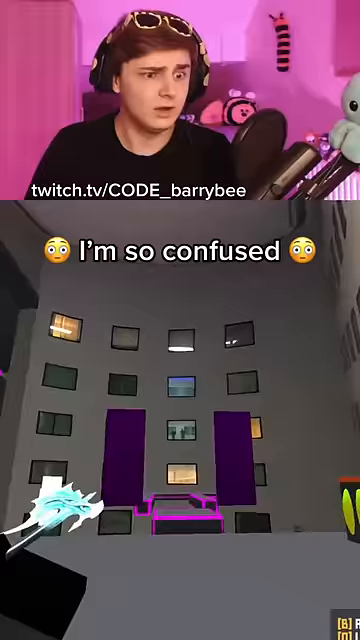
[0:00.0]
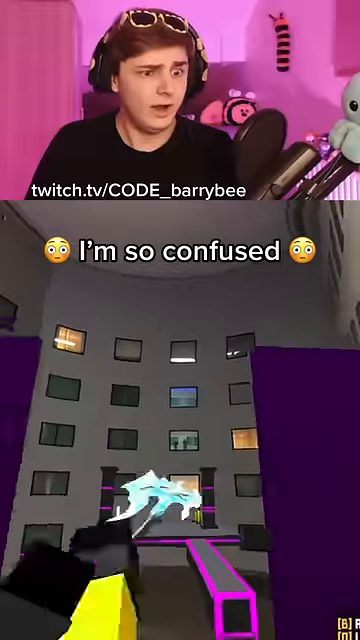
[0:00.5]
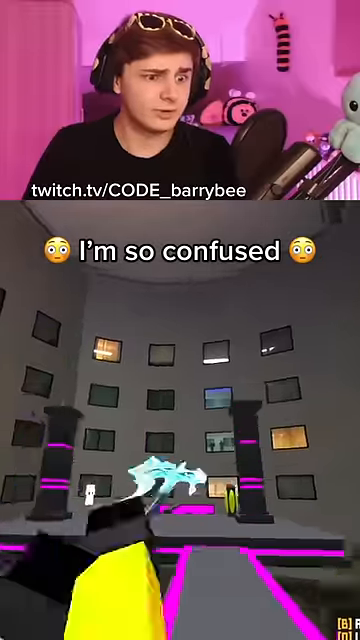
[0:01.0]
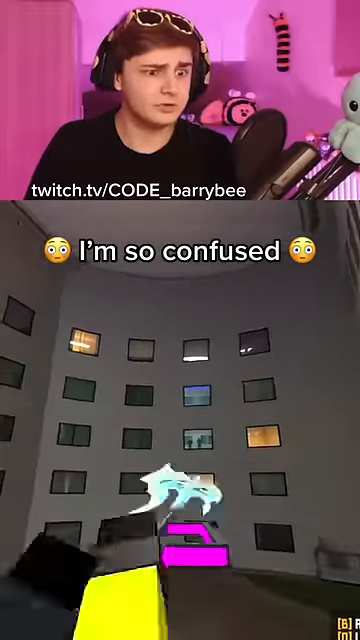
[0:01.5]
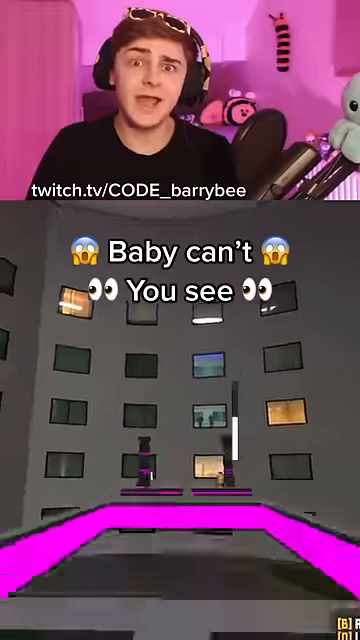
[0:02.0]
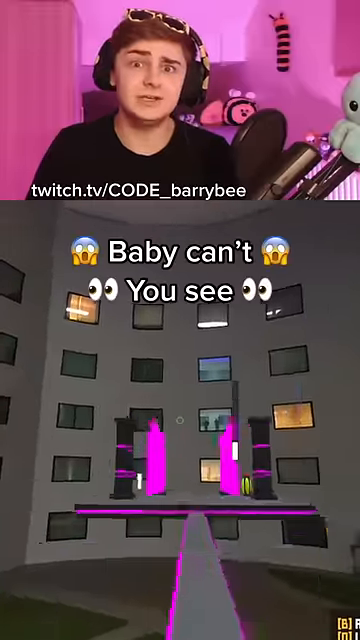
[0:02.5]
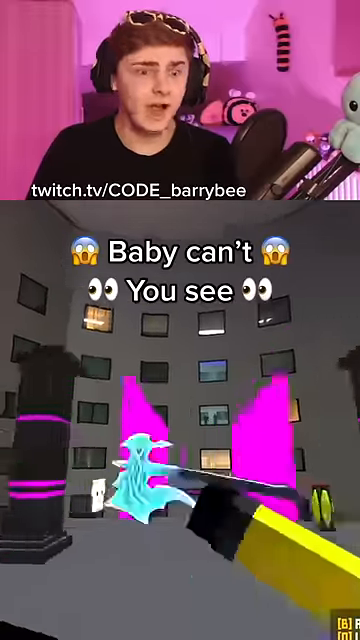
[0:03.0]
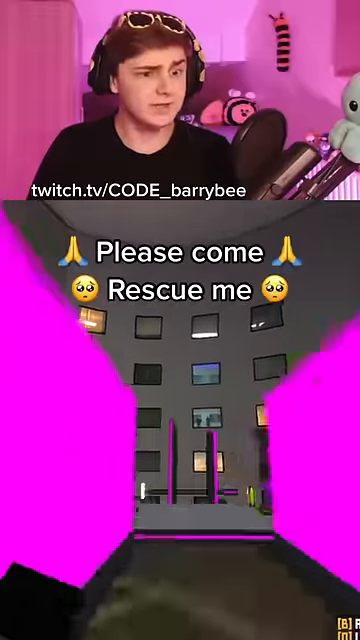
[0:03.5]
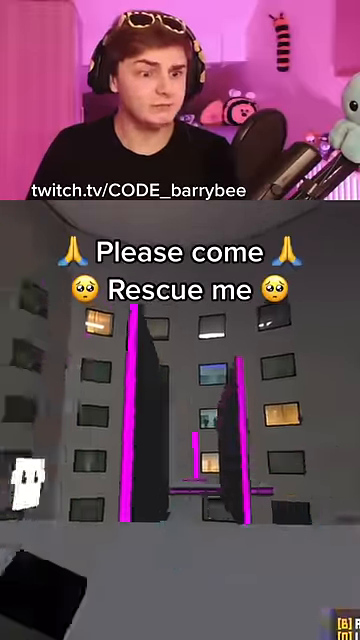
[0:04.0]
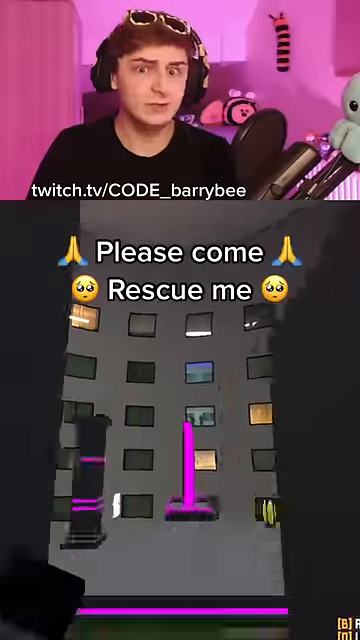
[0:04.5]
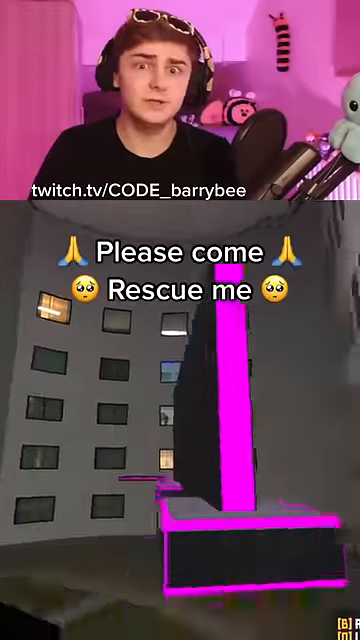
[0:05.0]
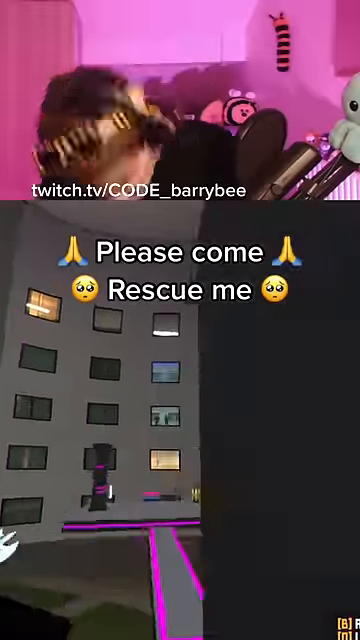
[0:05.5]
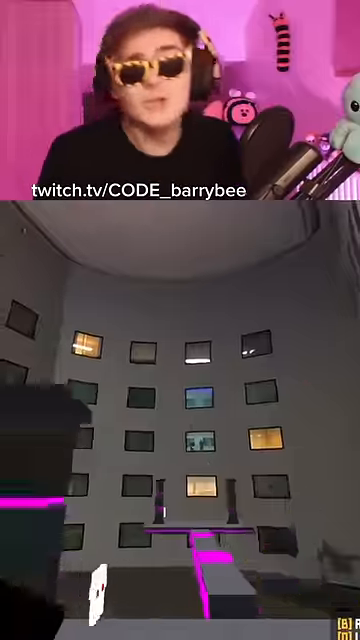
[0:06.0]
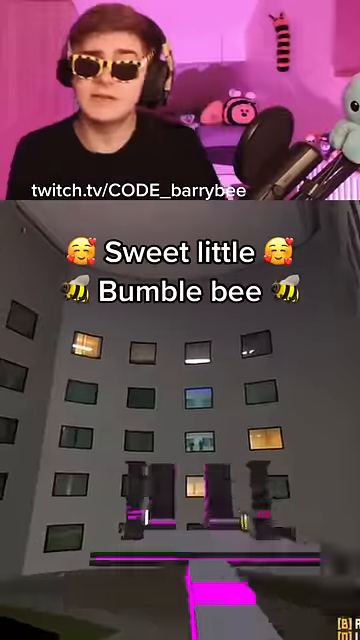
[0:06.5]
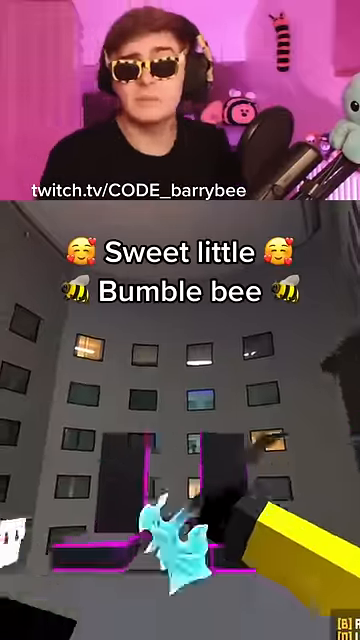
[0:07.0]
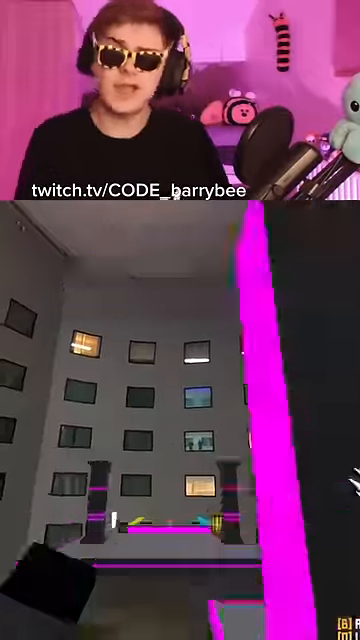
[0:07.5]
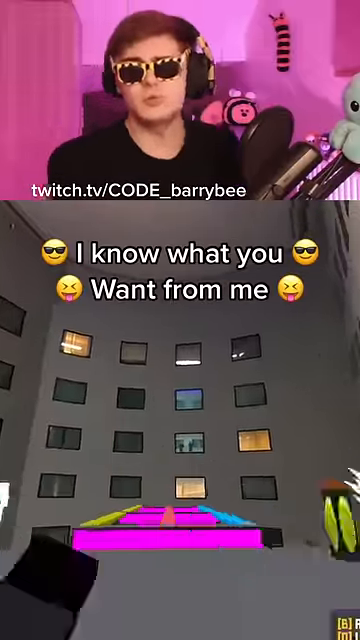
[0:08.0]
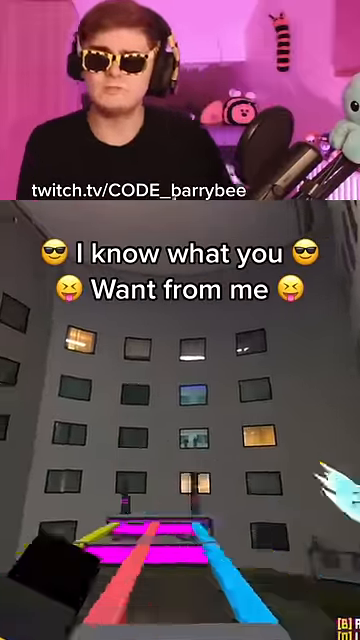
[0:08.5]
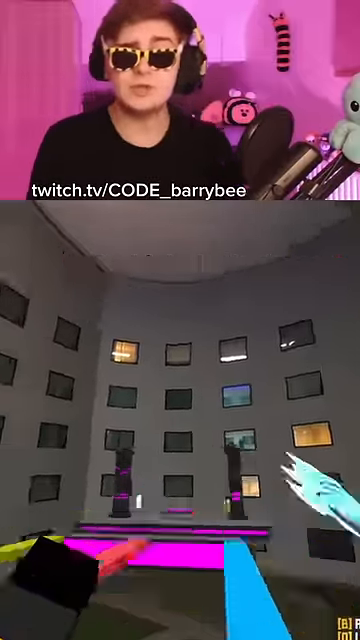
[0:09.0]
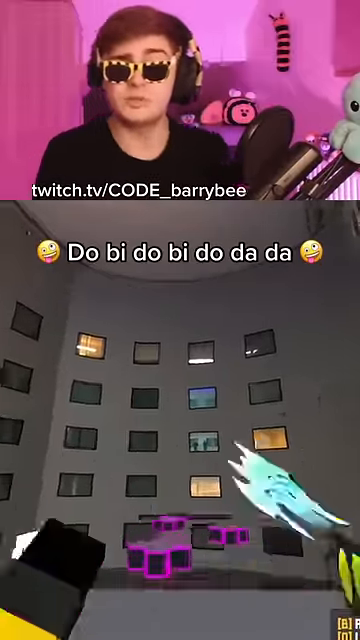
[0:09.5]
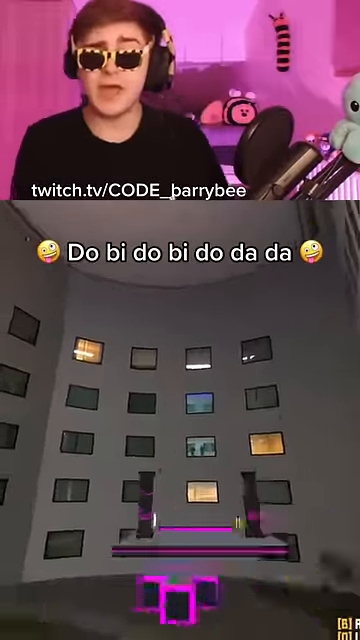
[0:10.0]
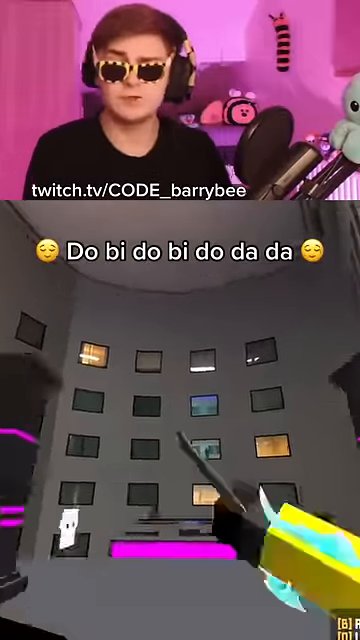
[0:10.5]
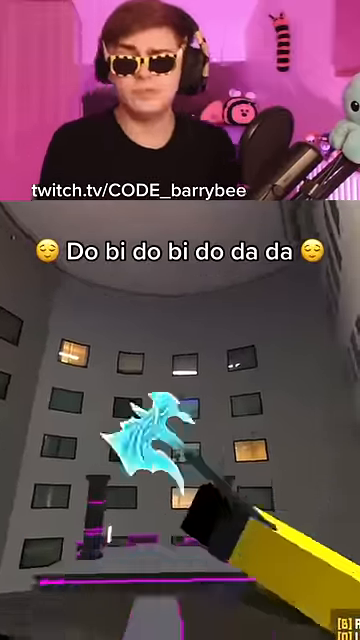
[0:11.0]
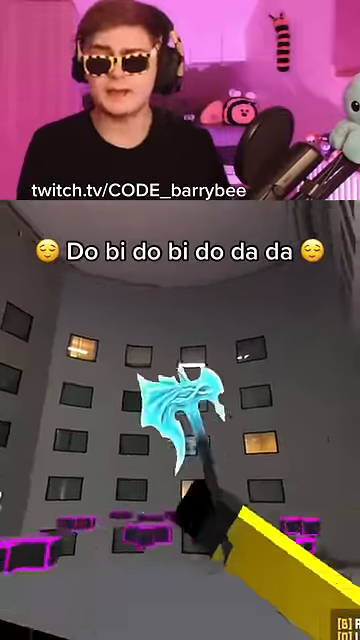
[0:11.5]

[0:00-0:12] A teenager reviews a game at the top of the screen. He has brown hair, wears a black shirt and shades, and has a little podcast setup. The game footage is fast-moving and appears to show a building in the background and a hallway space. Something moves very fast that looks like some sort of weapon, such as a sword, a machete or a sickle. He flies through the screen along a small transparent path leading into the building, and a sword whips very quickly across the screen. Certain words appear on the screen. He seems to be singing while playing and reviewing the game, which looks like a PC game.